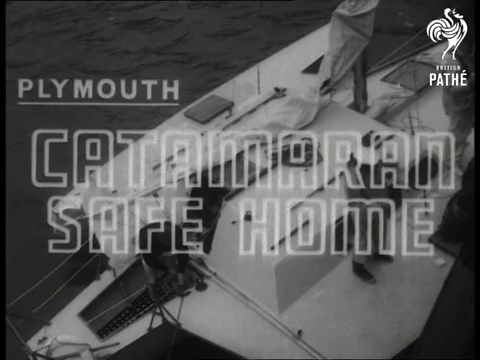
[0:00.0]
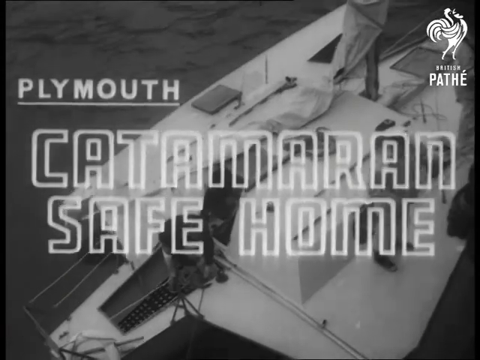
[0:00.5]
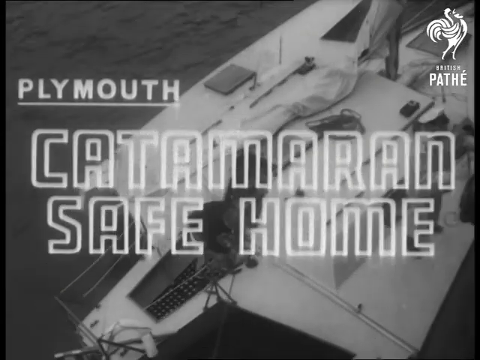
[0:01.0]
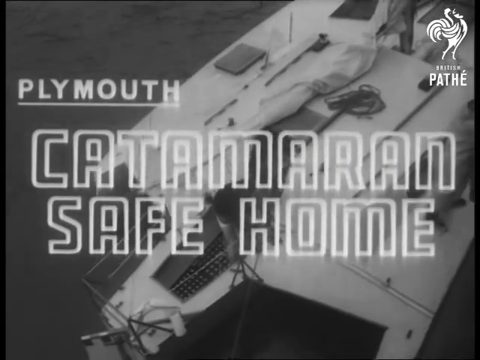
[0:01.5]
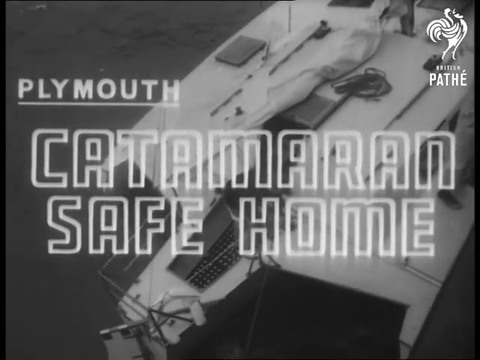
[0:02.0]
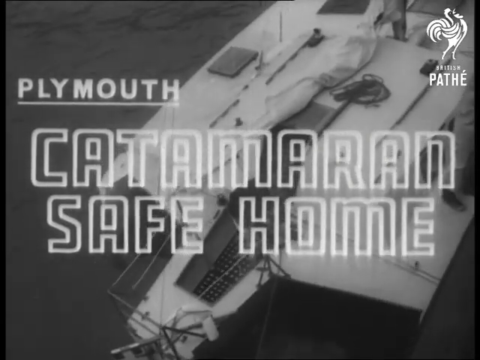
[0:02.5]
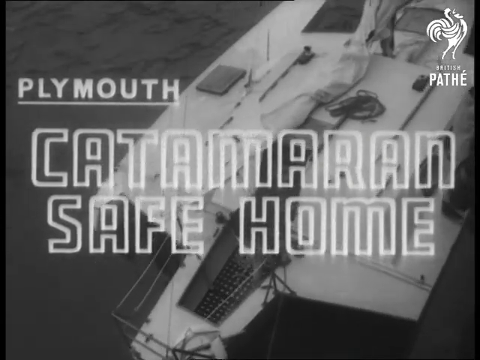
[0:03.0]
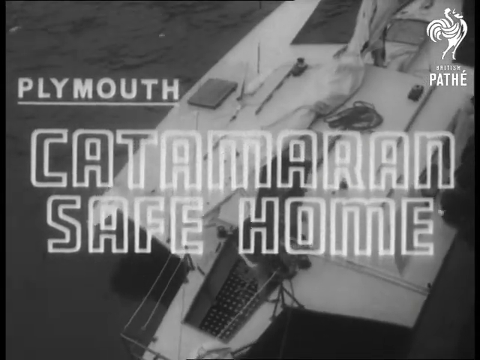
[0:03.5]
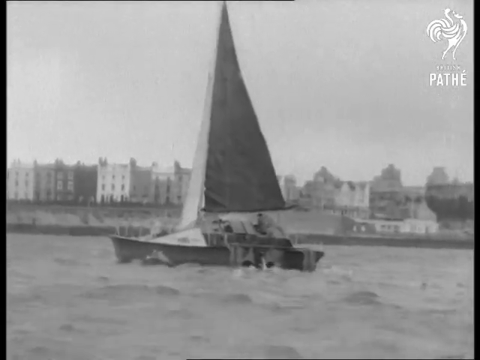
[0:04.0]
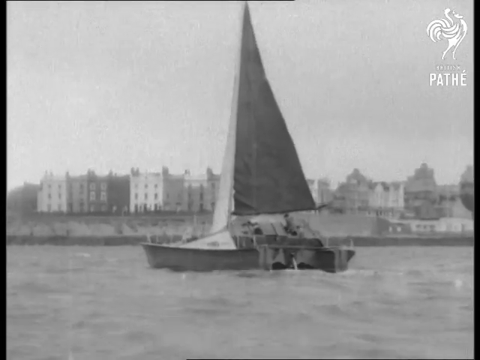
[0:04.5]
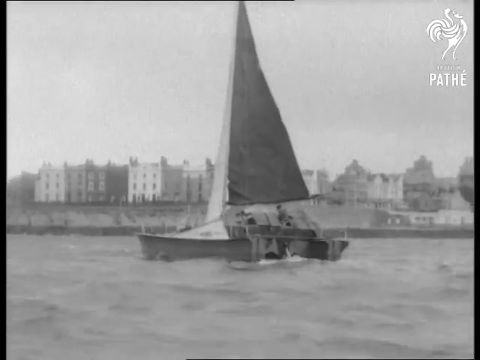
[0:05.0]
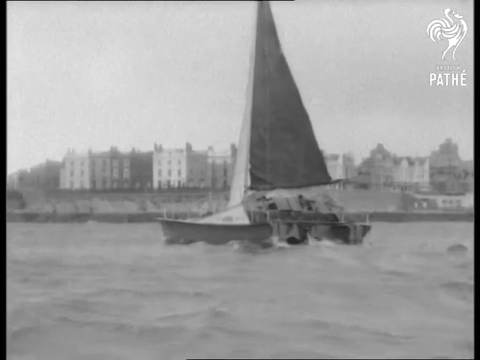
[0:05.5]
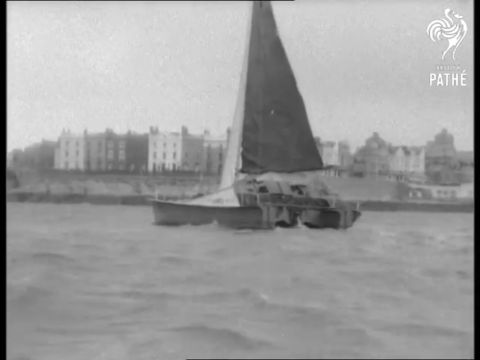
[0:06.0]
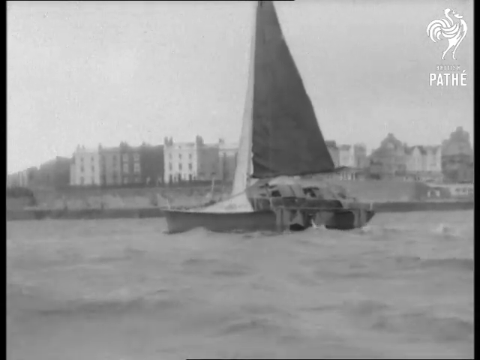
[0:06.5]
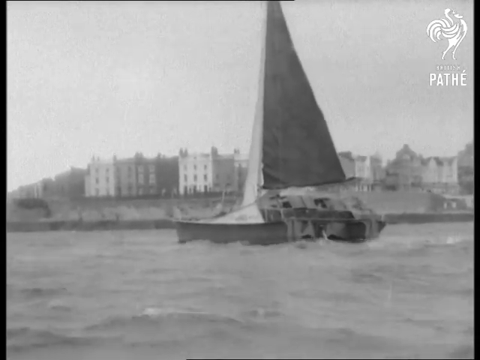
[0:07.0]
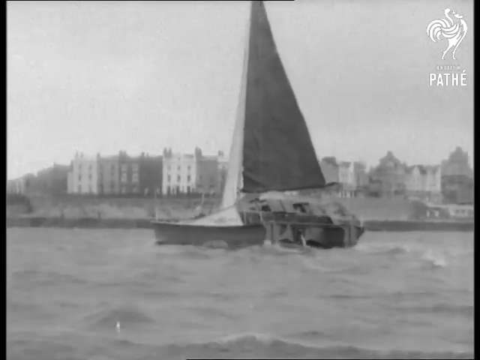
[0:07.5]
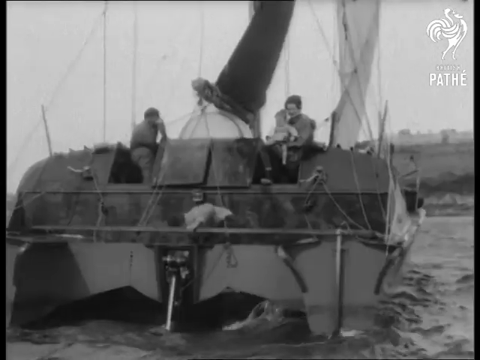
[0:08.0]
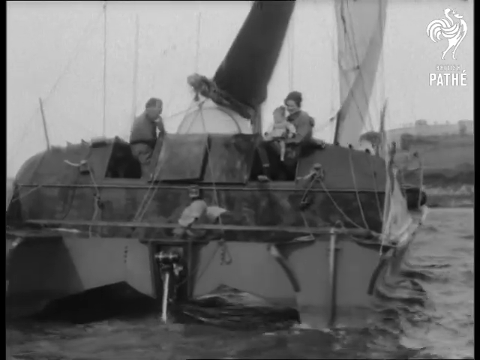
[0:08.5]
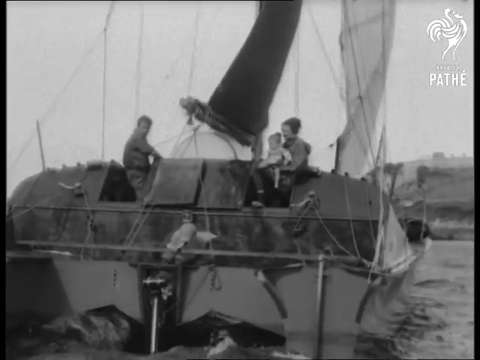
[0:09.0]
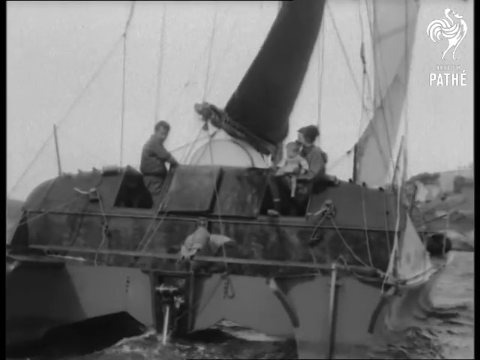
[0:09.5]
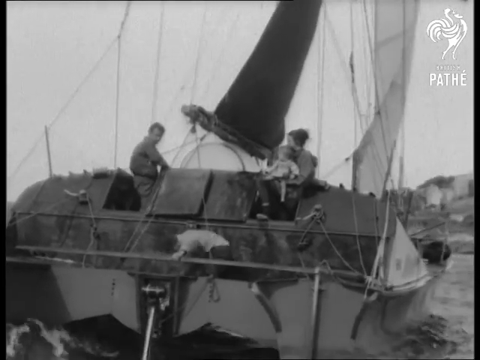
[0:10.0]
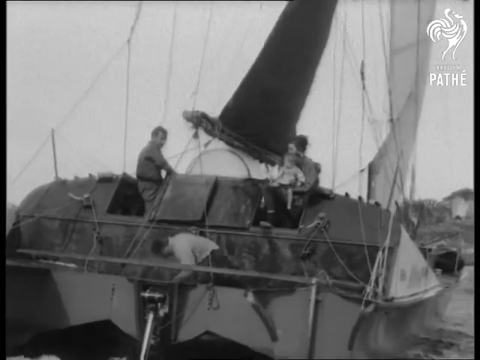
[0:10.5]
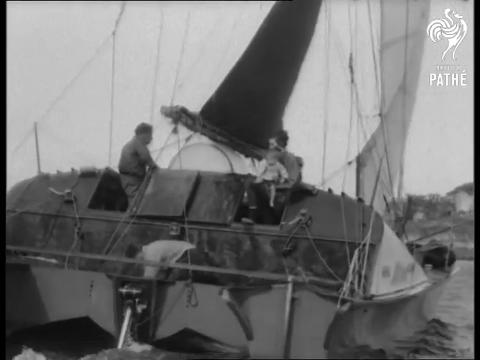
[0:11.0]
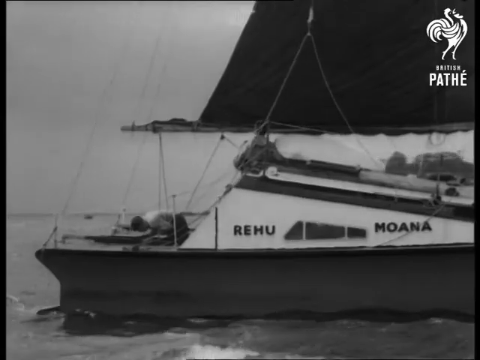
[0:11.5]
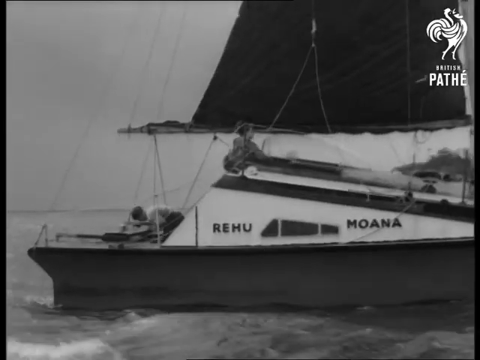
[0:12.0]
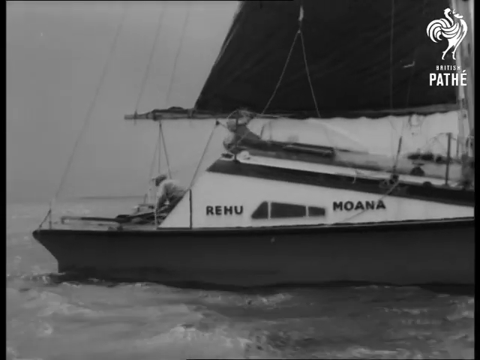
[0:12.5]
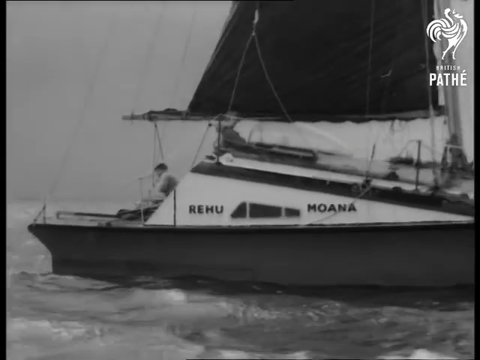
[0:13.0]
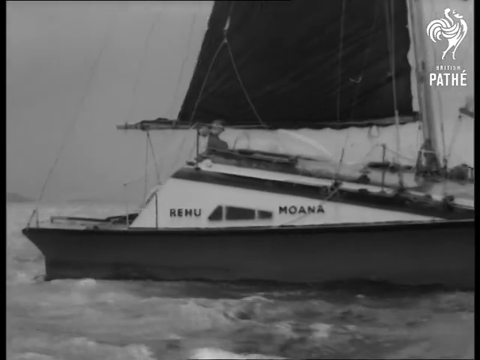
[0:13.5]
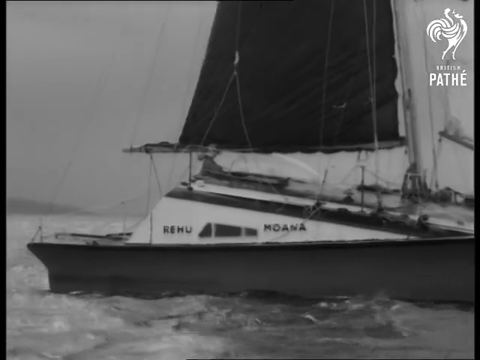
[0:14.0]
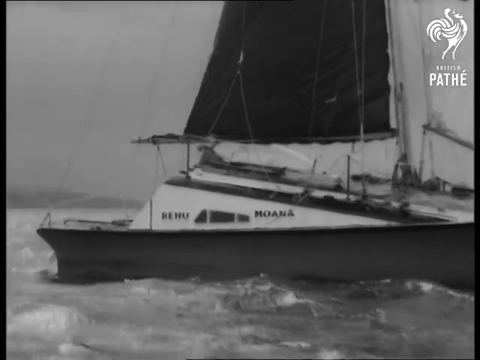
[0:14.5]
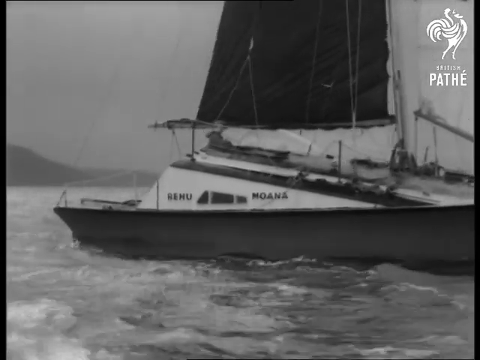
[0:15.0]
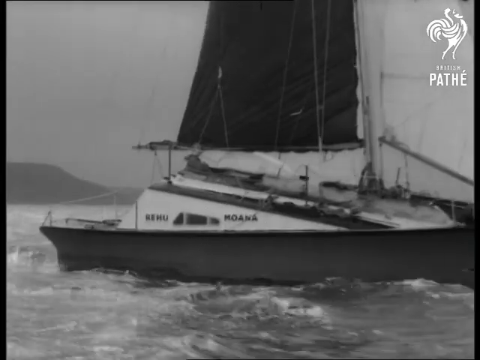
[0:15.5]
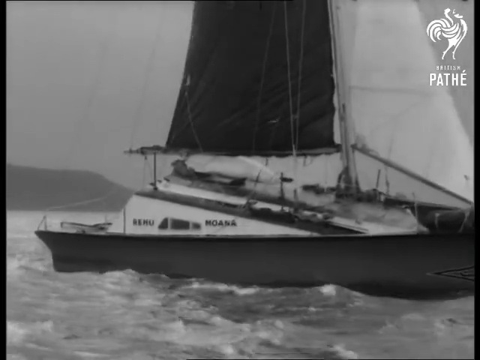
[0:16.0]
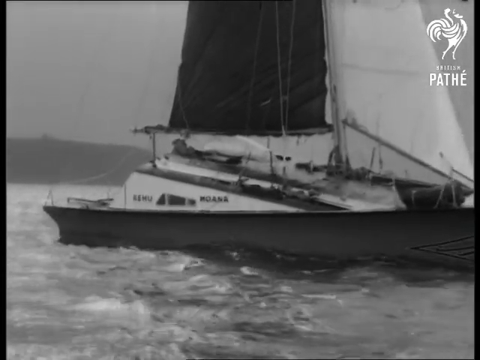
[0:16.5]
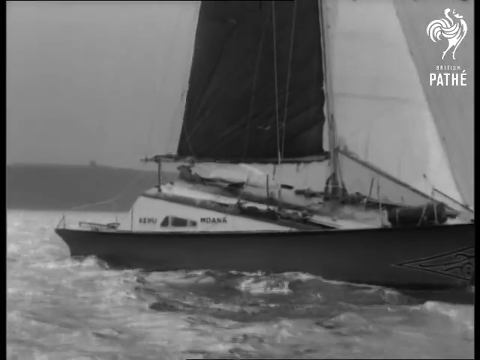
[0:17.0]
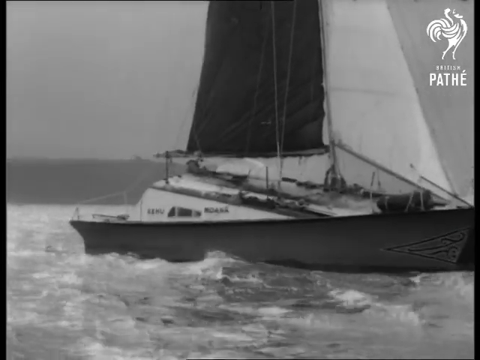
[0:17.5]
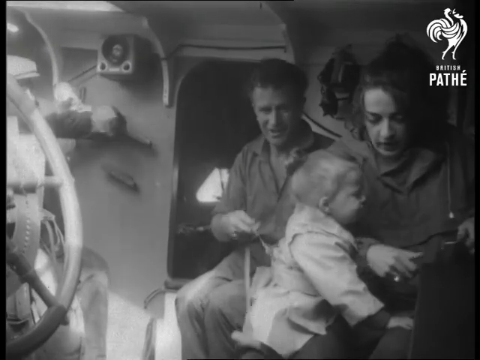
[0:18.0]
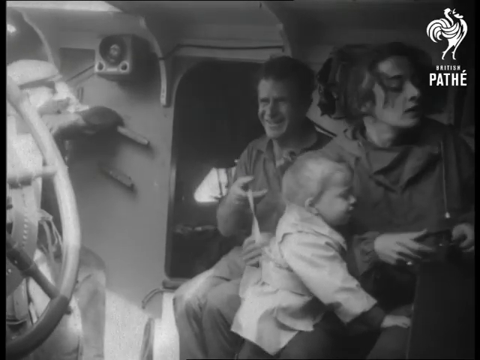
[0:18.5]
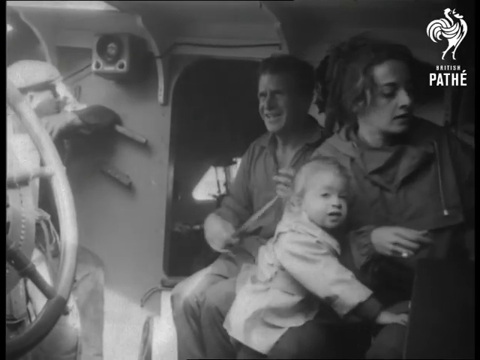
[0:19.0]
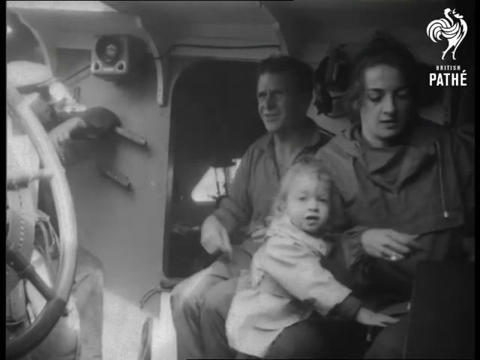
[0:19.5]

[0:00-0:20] A top-down shot shows a catamaran sailing through the water in an old black-and-white video. On-screen text reads "Plymouth Catamaran Safe Home," and in the top right corner there is a stylized image of a rooster with the letters "P-A-T-H-E." People are on the boat as it sails alongside the viewpoint across choppy water. Four people are visible on the boat: a man at the top left, a woman at the top right holding a small child, and a man at the bottom who appears to be working the boat's motor. The camera then pans past the boat in a side view; the side appears to say "REHU" and then "MOANA." The water is very choppy and the wind is strong. Inside the boat are a man, a woman and a child. The man laughs and talks while manipulating a piece of rope between his hands. A person off to the left is mostly not visible, but their left arm can be seen leaning against the side of the inside of the boat. The woman talks to the child and looks like she is passing something between her hands. The child turns to look in the general direction of the camera.